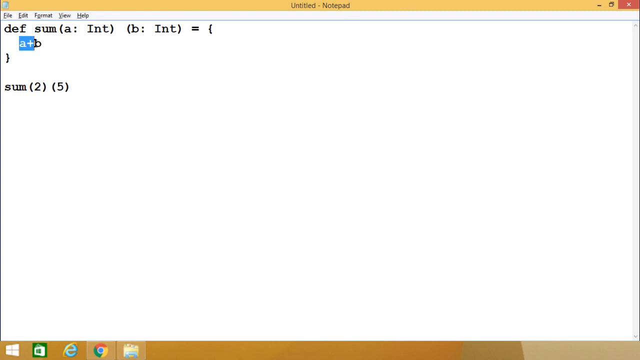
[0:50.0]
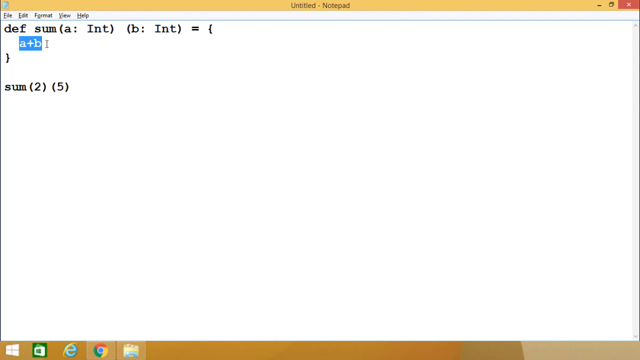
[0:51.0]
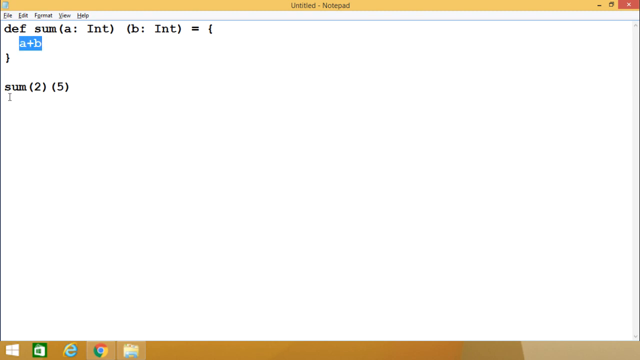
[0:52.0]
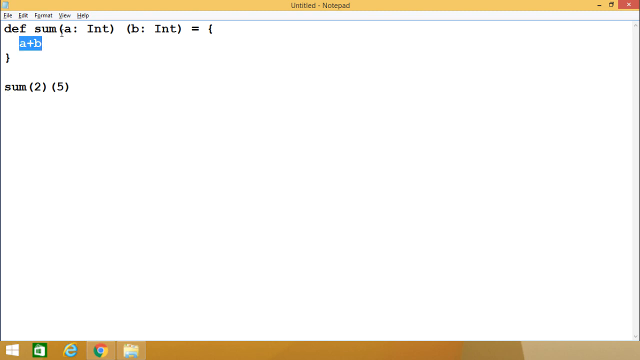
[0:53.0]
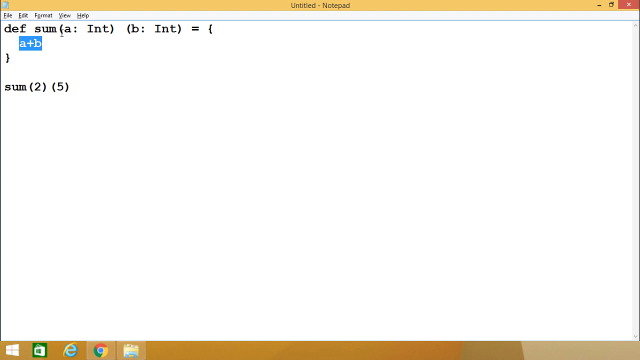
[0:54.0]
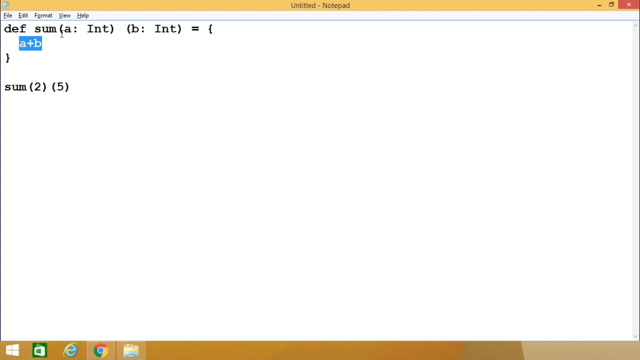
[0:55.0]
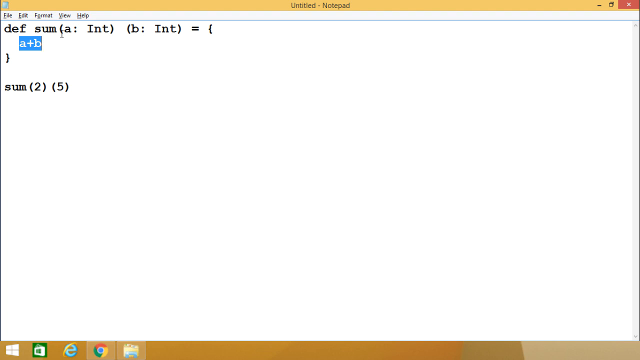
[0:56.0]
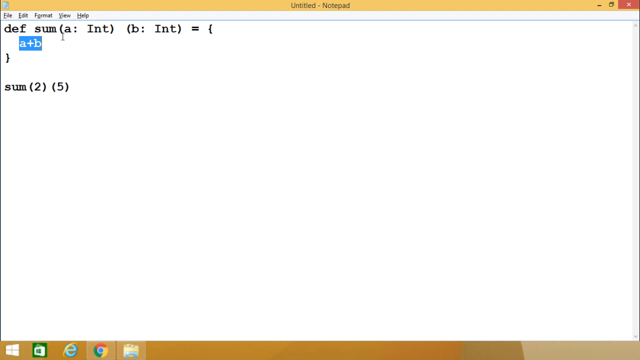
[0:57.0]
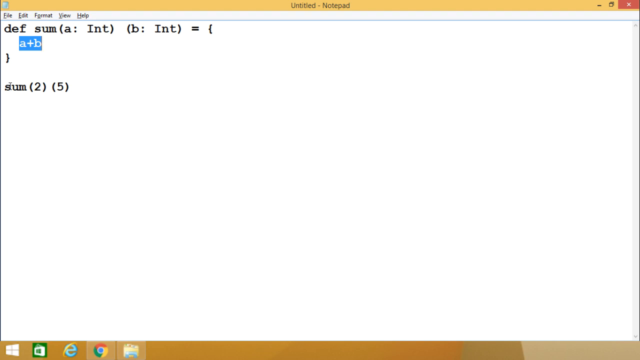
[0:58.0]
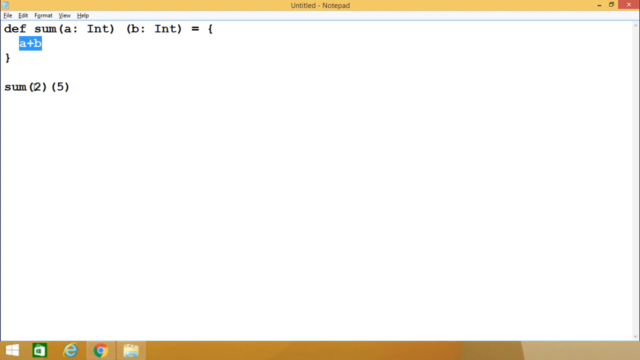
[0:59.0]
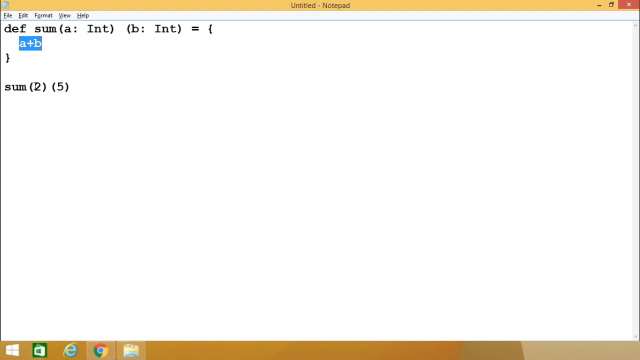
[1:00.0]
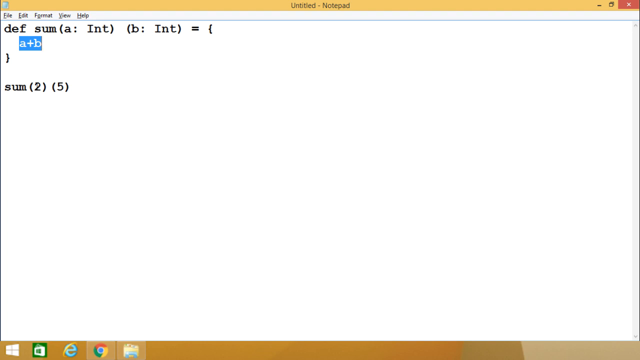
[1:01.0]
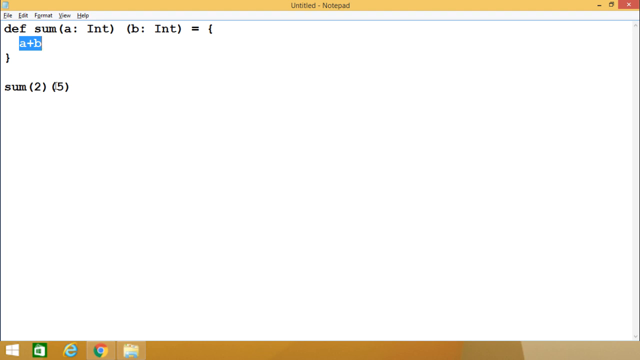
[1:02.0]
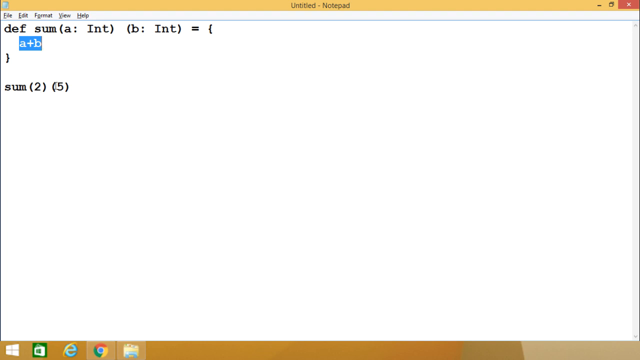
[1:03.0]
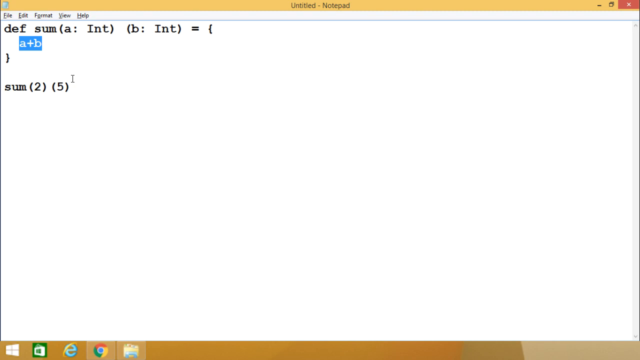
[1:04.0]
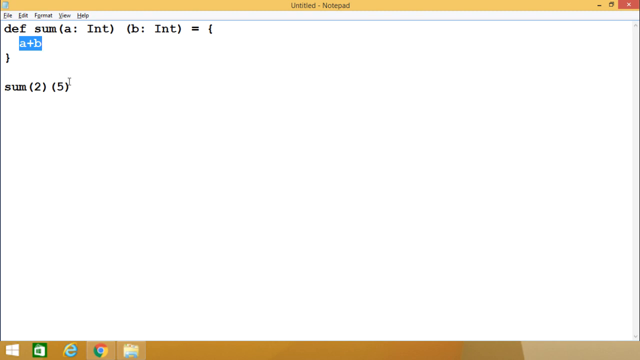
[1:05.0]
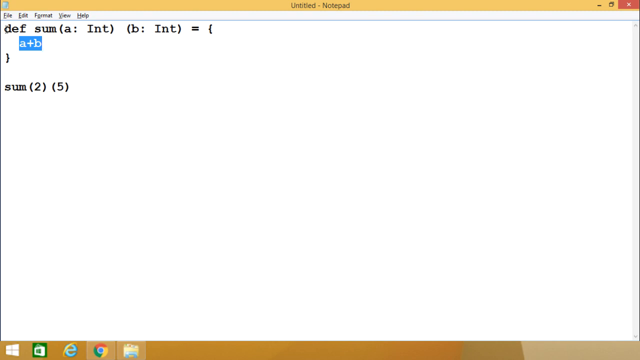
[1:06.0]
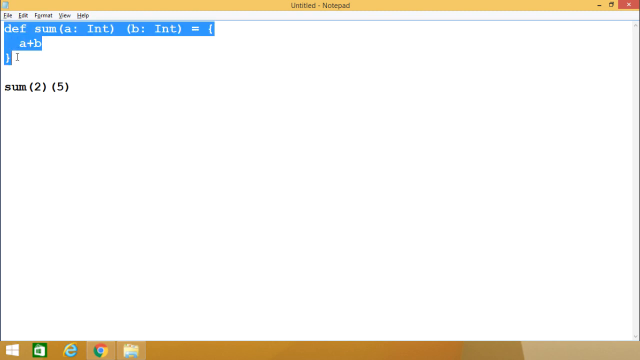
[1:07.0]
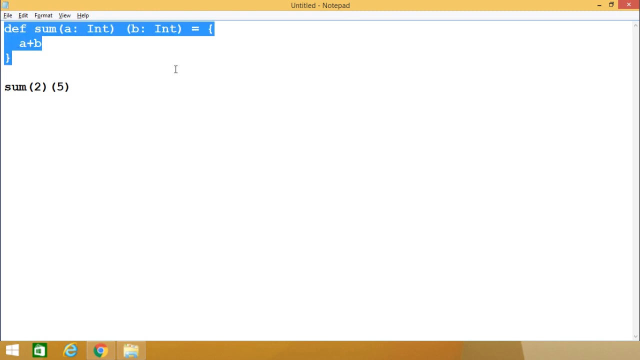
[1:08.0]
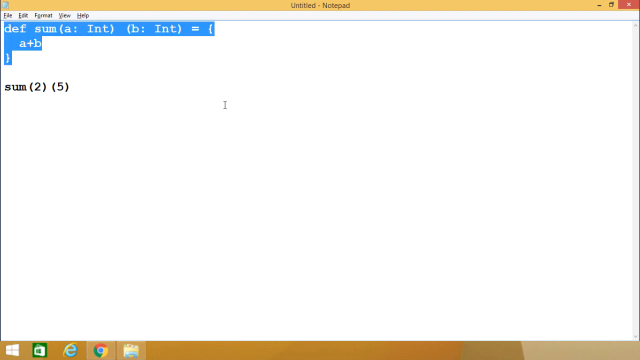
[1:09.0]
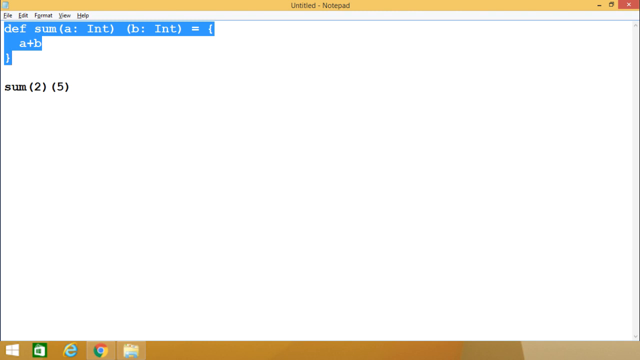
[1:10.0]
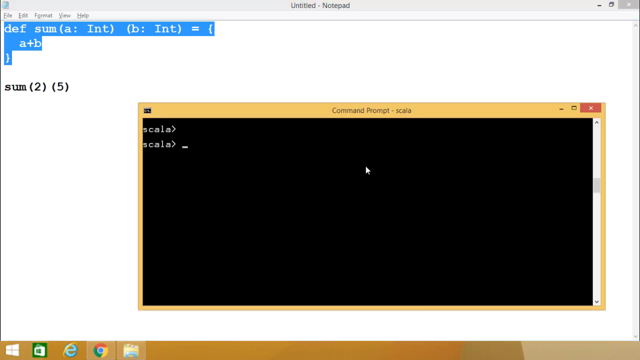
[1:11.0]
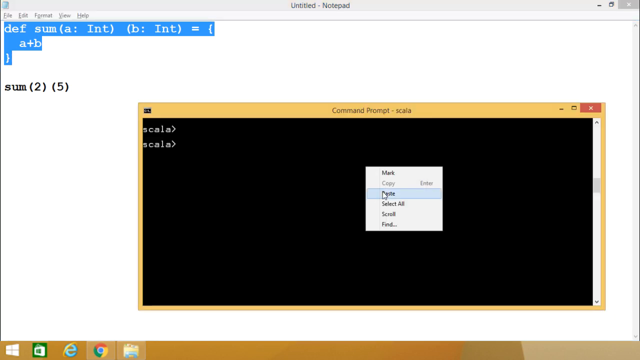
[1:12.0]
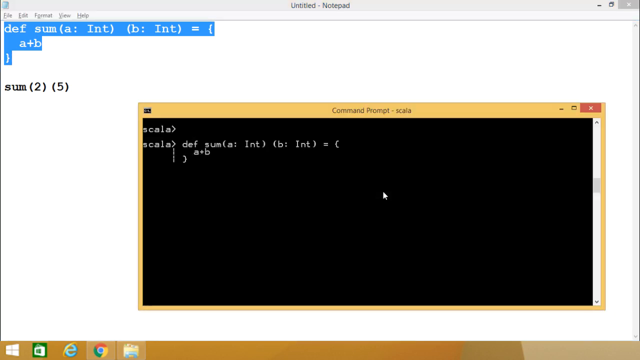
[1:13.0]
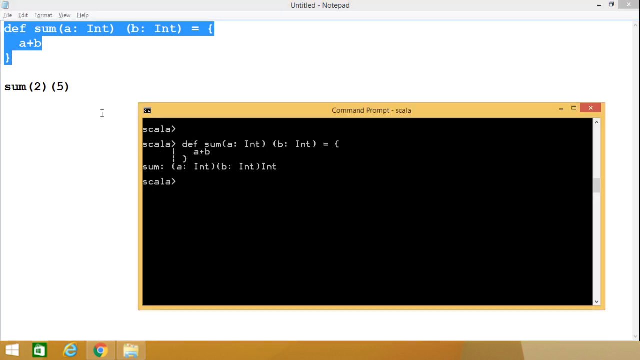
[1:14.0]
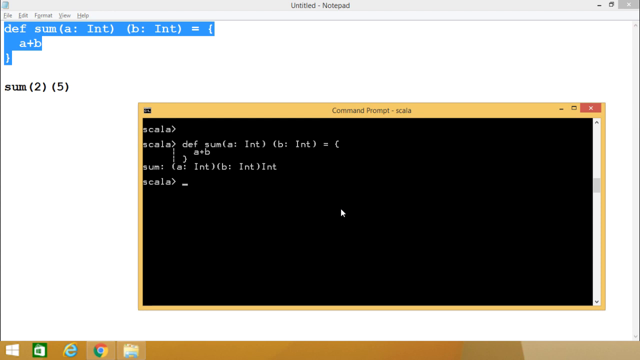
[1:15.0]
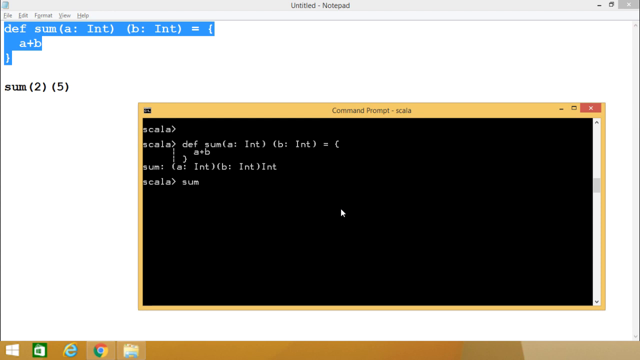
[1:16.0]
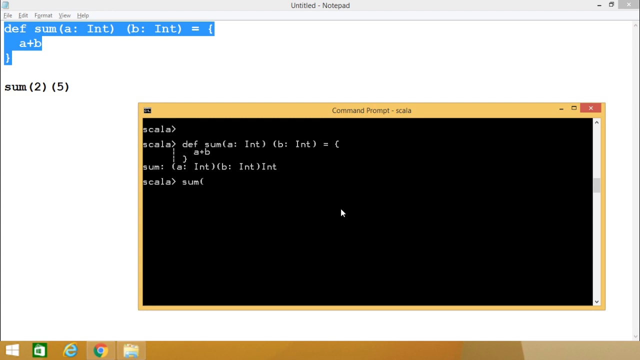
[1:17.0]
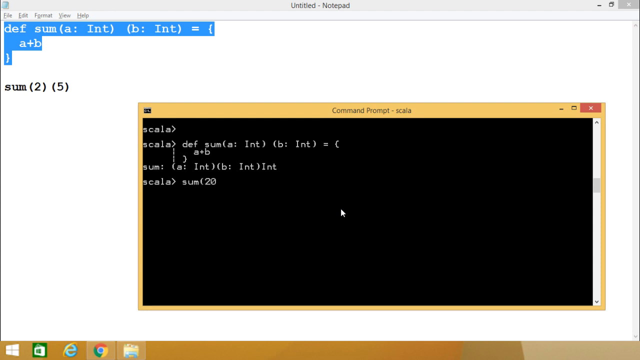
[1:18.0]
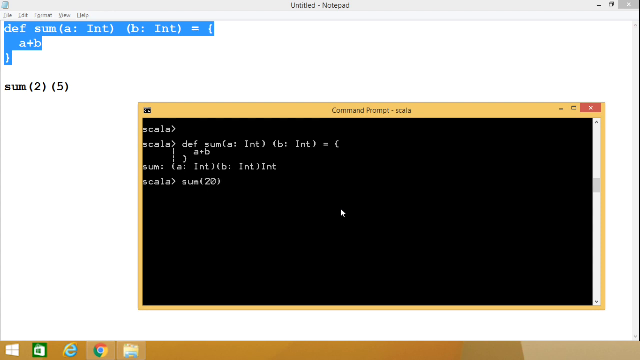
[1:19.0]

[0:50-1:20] The mouse moves to "a + b" and selects it, marking it with a blue background. The mouse then moves to the characters in the first row and pauses briefly, then quickly moves to the last row, "Sum (2) (5)", pausing briefly on the numbers 2 and 5. It returns to the first line, and all the characters in the first, second, and third lines are highlighted in blue. The mouse moves to the bottom right of the screen and clicks something in the toolbar at the very bottom. The blackboard, which had disappeared, reappears. A new toolbar appears on the blackboard, apparently after a right-click, and paste is selected; the characters highlighted in blue appear on the blackboard. Some new content is then entered on the blackboard.